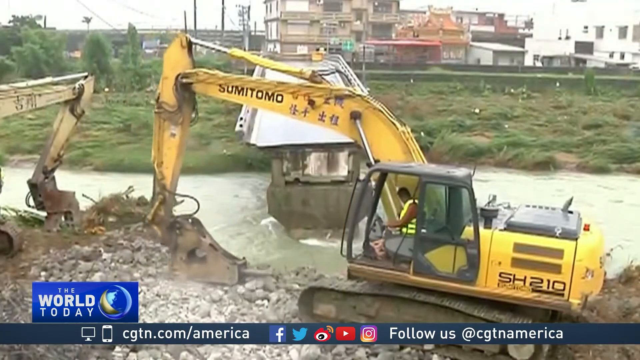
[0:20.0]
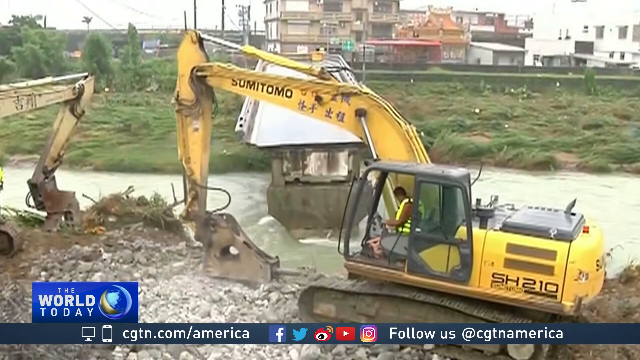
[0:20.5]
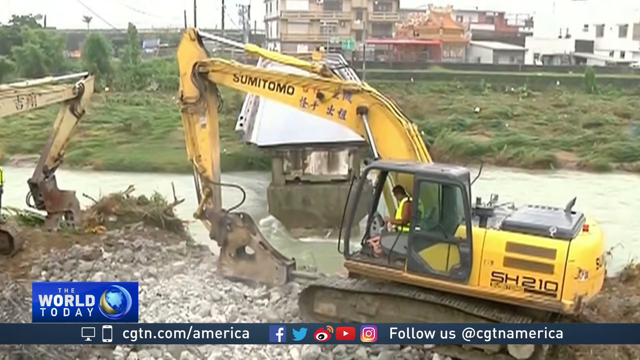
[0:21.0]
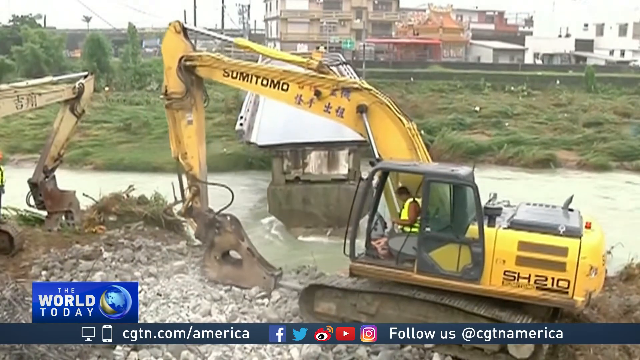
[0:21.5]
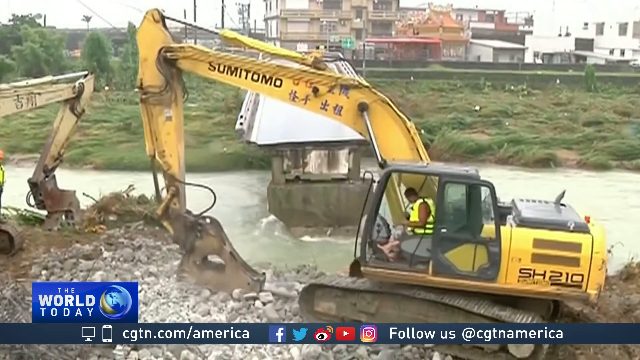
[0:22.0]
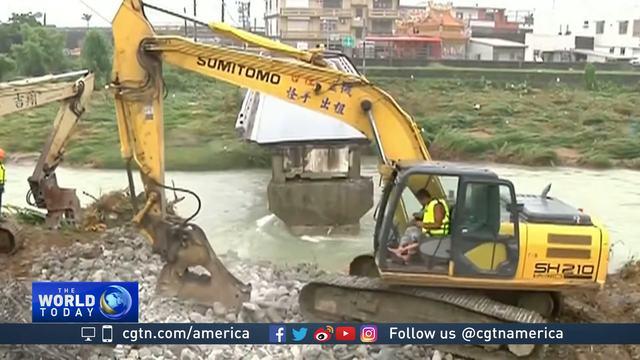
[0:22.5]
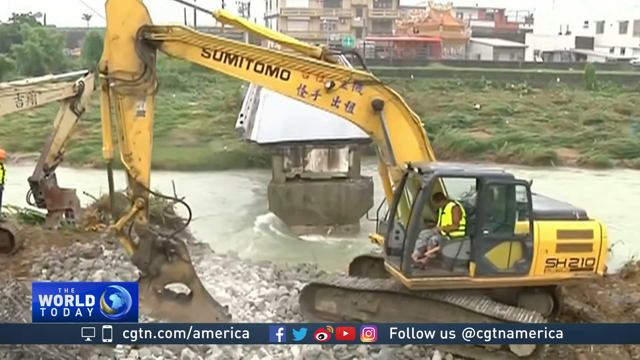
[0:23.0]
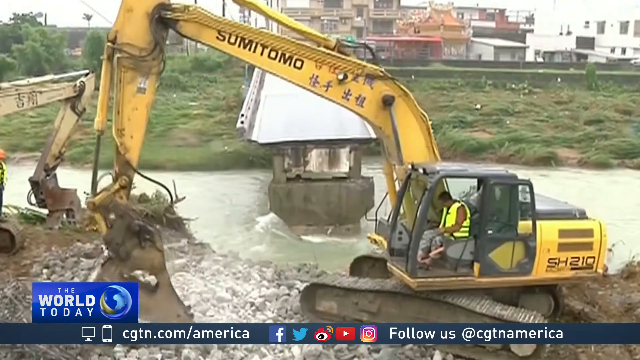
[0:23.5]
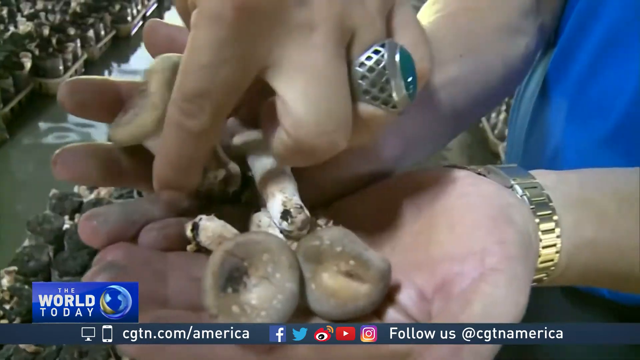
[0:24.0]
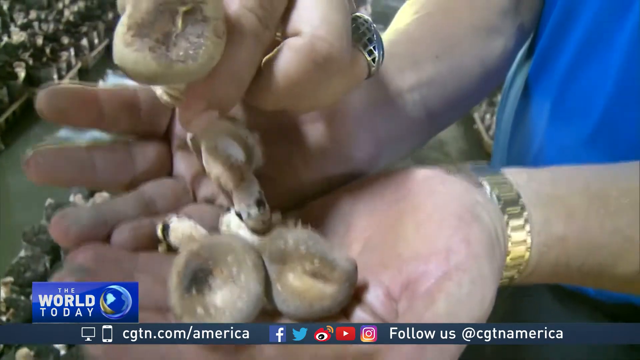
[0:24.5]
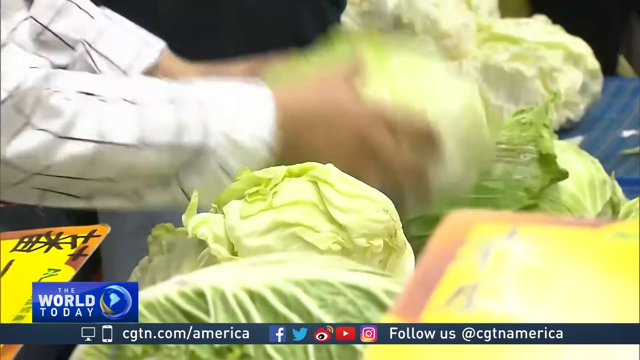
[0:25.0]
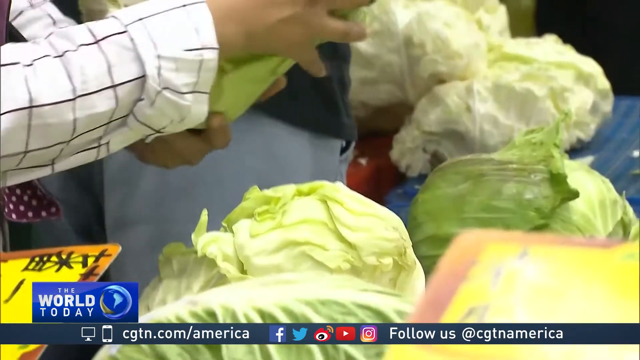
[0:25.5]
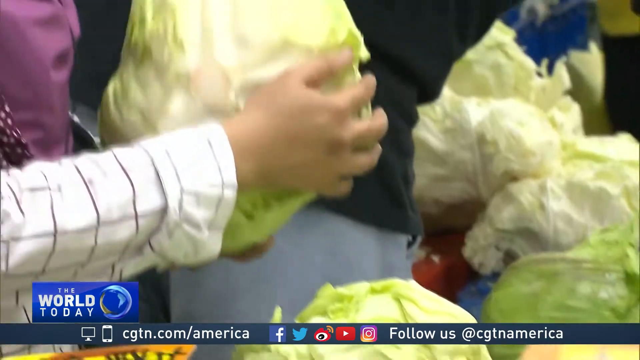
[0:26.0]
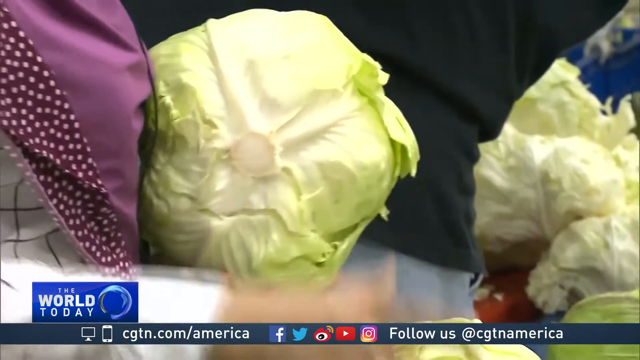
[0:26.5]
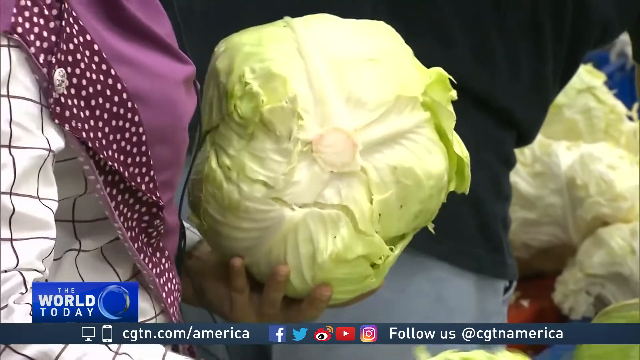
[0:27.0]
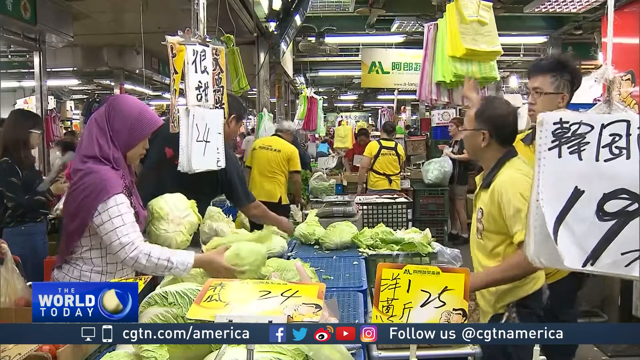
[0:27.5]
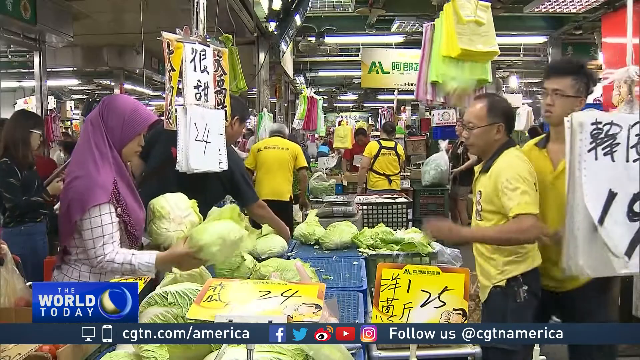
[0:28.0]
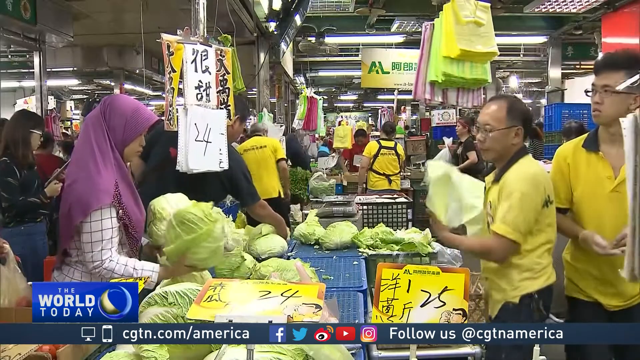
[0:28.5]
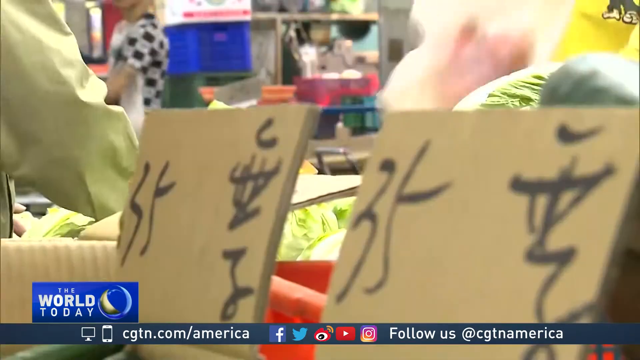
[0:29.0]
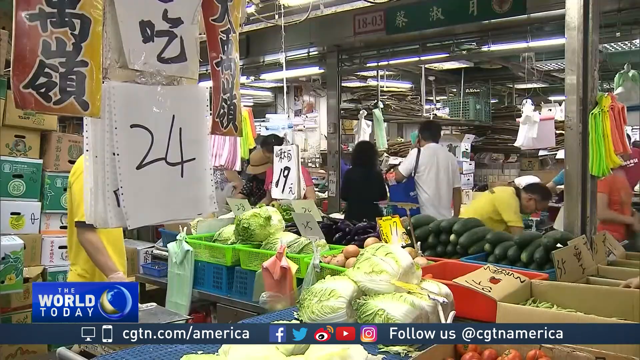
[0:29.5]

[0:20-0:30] A large yellow backhoe, apparently next to a river, rotates around and looks like it is moving or transporting rocks, seemingly to address the flooding. A close-up shows hands holding mushrooms, then another close-up shows someone grabbing a head of cabbage, possibly at a grocery store or market. The view pans out to reveal a market with lots of heads of cabbage. The woman handling the cabbage wears a purple headscarf, and the man helping her wears a yellow short-sleeved shirt and glasses; they look Asian. Close-ups show what look like cardboard signs with black Chinese characters, apparently giving prices, and a large "24" appears over some of the produce. Many people are at the market, with lots of things hanging and many goods, including dry goods, clothes or fabrics, and produce.